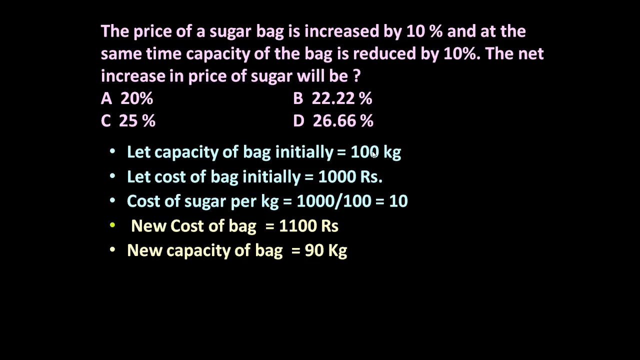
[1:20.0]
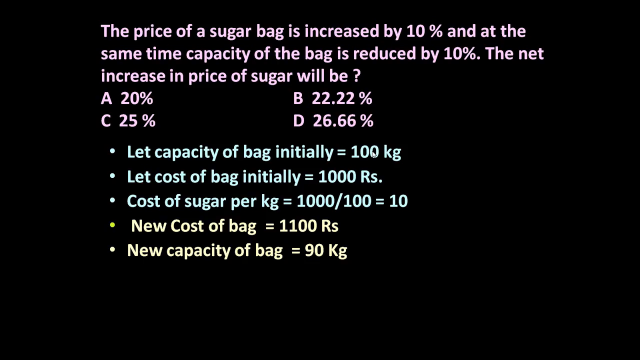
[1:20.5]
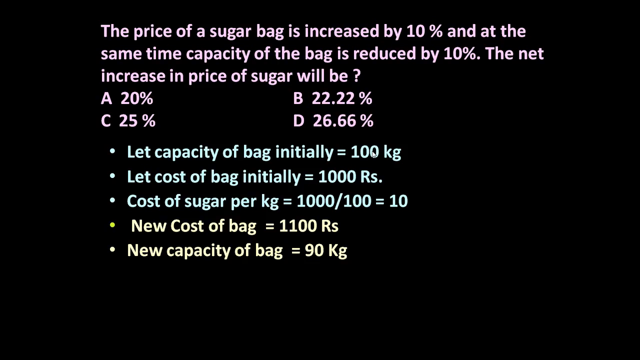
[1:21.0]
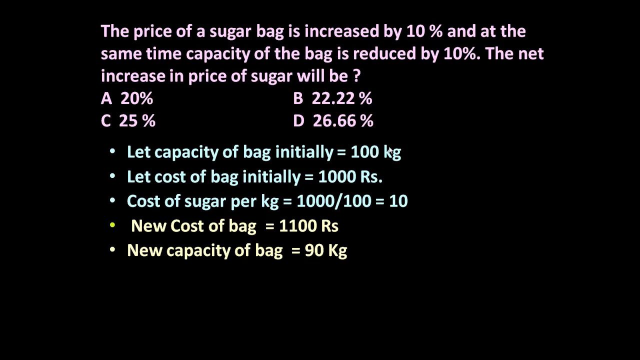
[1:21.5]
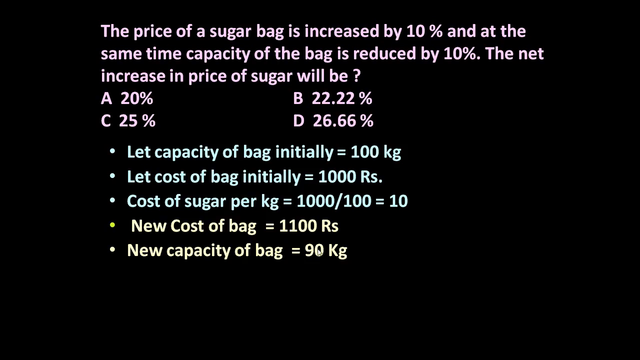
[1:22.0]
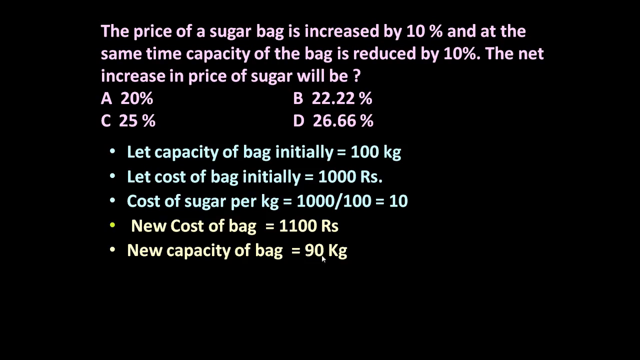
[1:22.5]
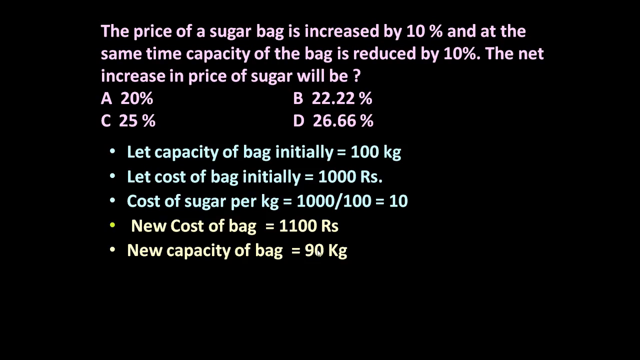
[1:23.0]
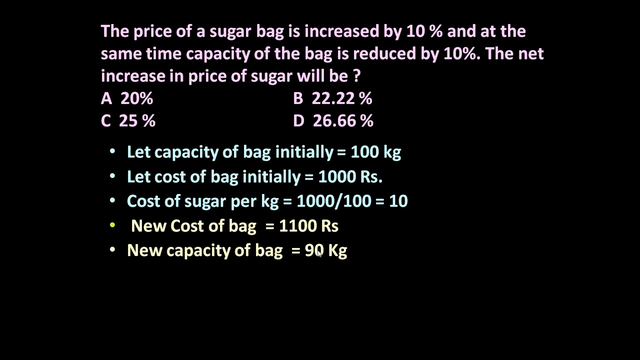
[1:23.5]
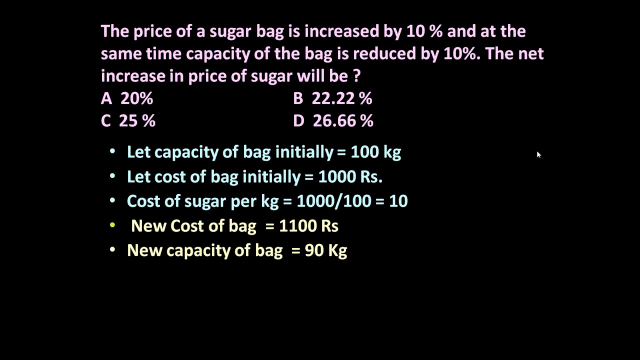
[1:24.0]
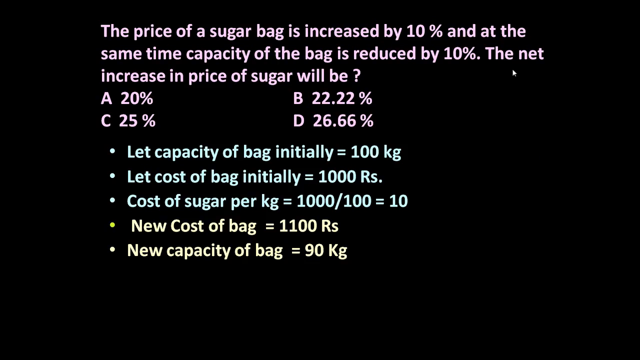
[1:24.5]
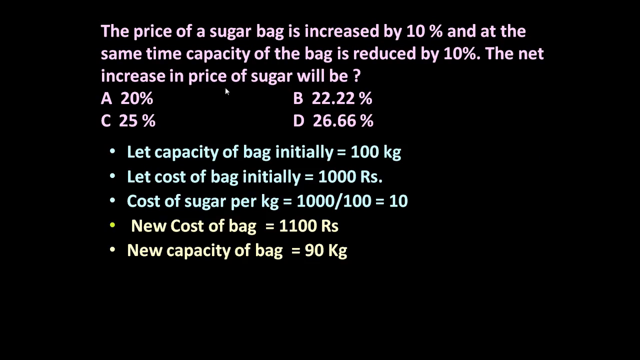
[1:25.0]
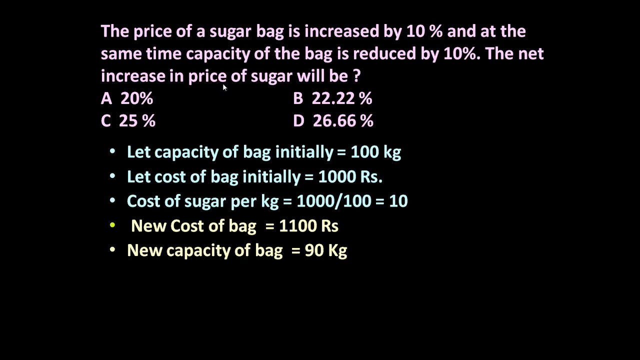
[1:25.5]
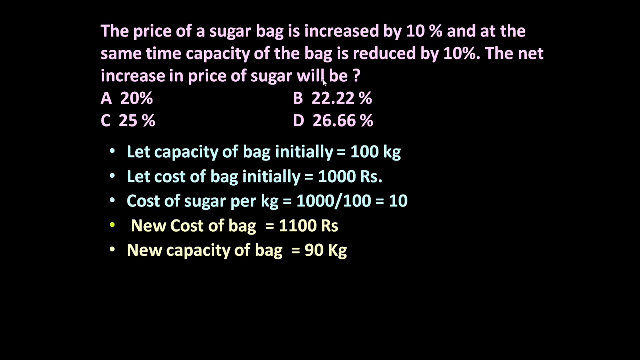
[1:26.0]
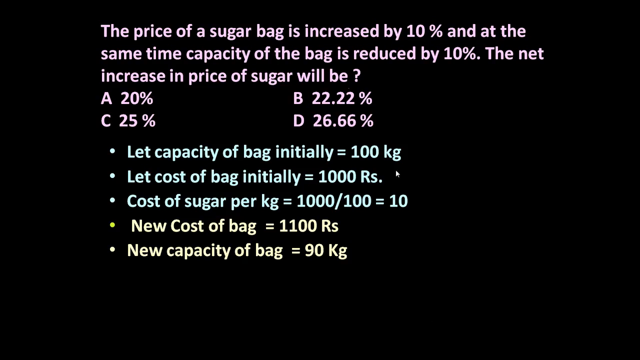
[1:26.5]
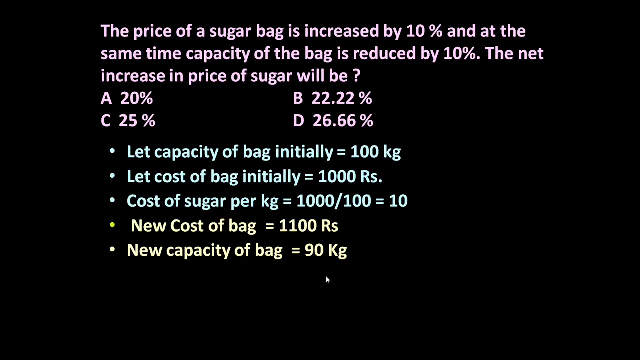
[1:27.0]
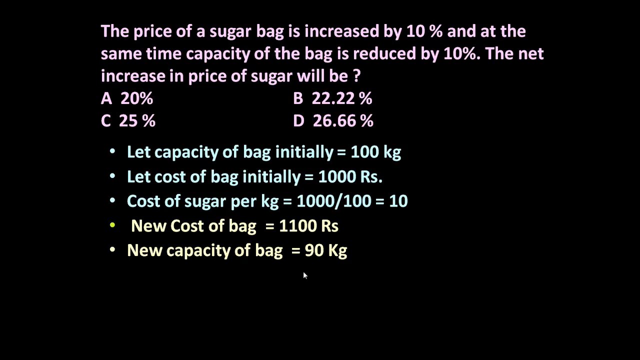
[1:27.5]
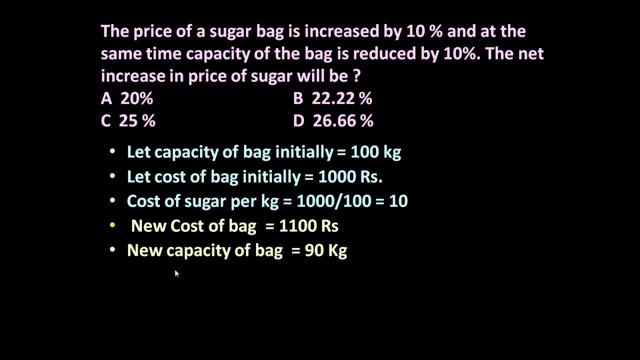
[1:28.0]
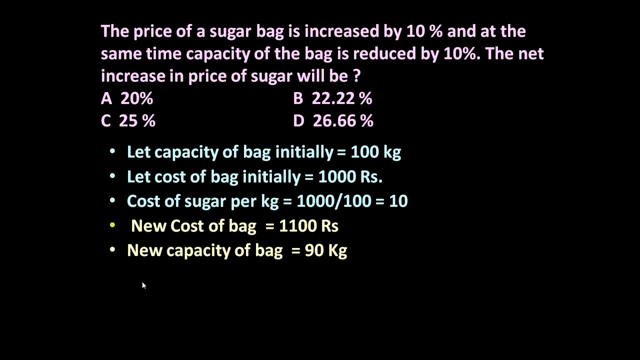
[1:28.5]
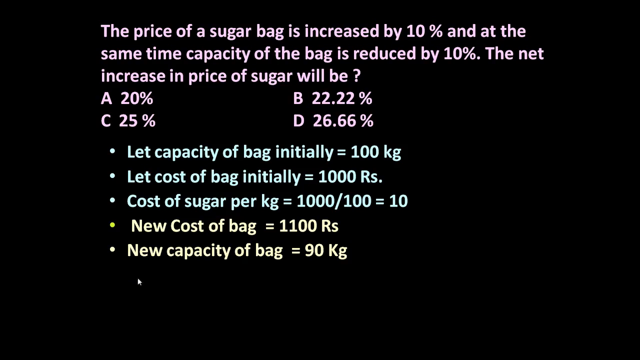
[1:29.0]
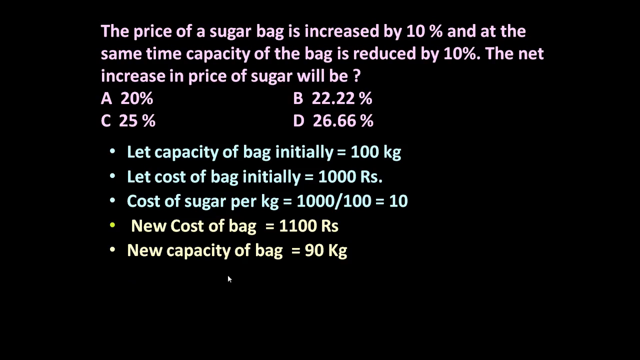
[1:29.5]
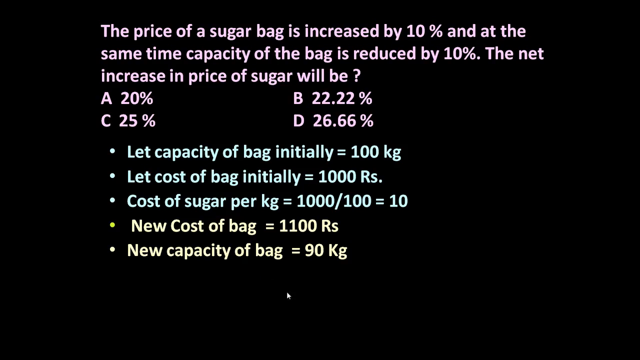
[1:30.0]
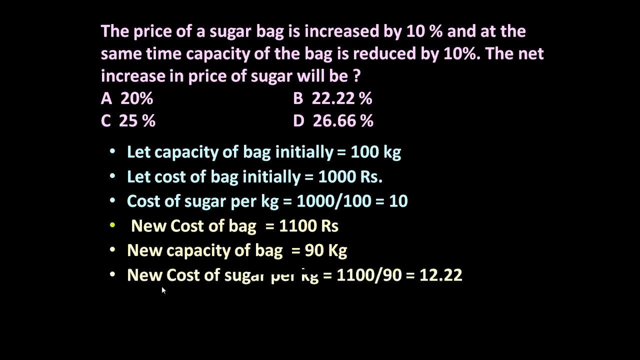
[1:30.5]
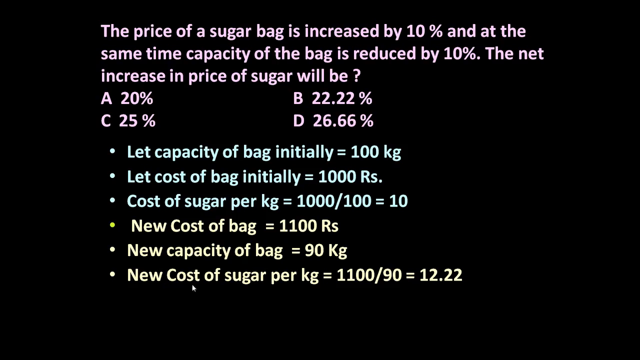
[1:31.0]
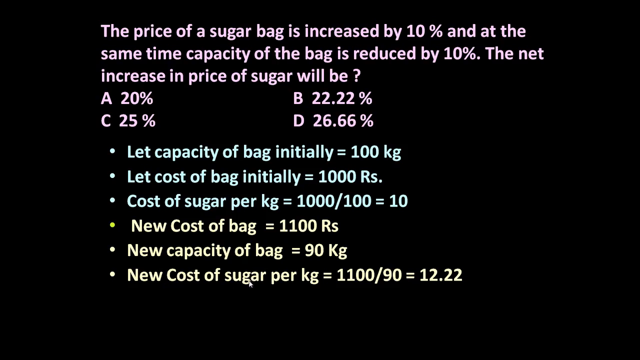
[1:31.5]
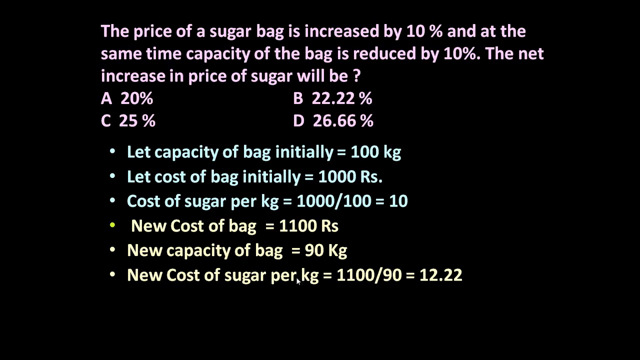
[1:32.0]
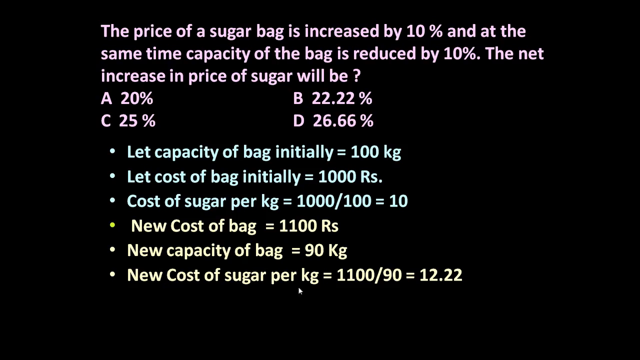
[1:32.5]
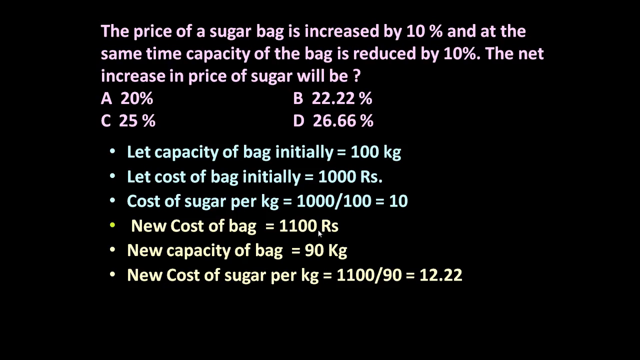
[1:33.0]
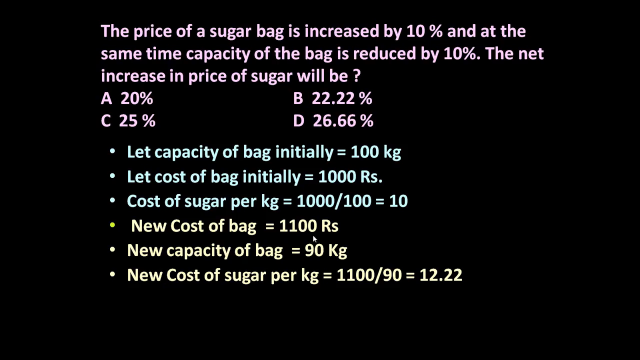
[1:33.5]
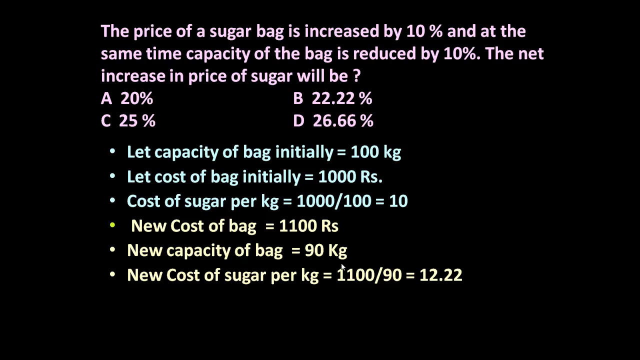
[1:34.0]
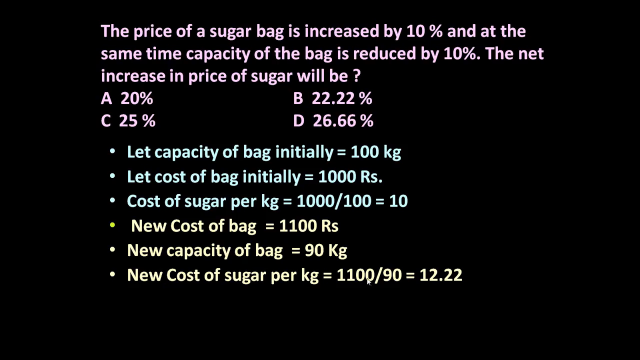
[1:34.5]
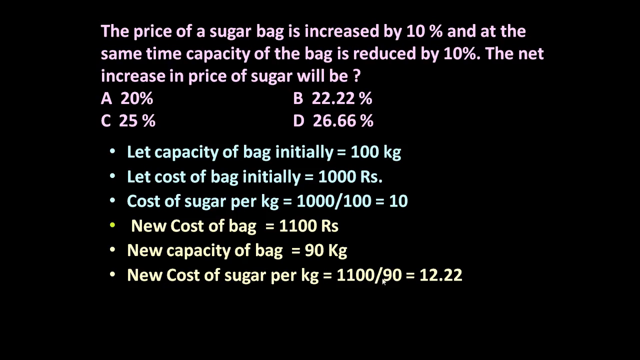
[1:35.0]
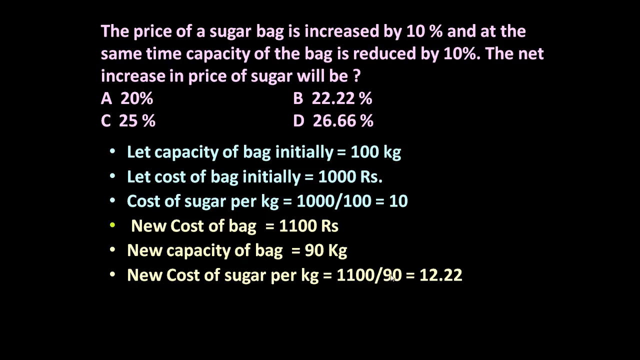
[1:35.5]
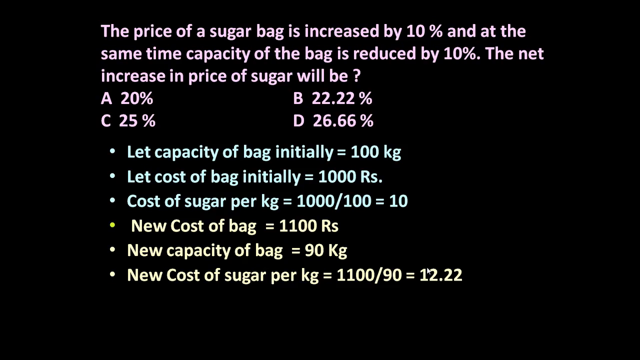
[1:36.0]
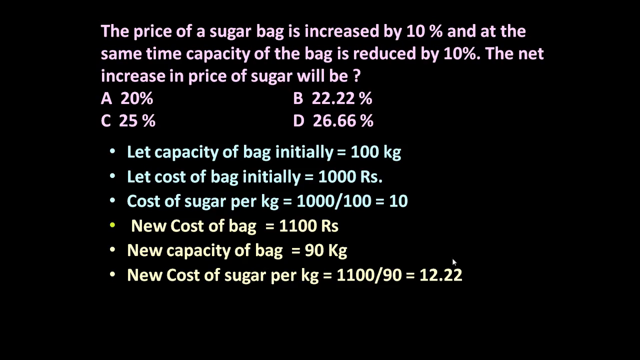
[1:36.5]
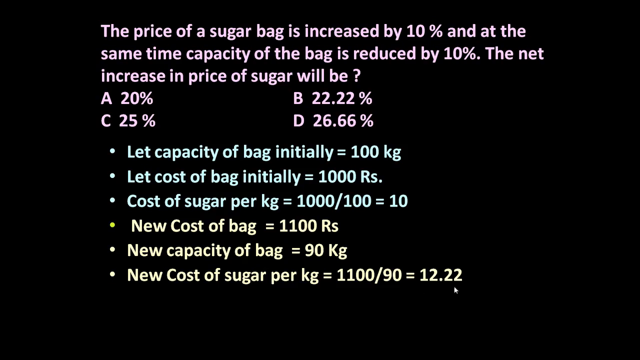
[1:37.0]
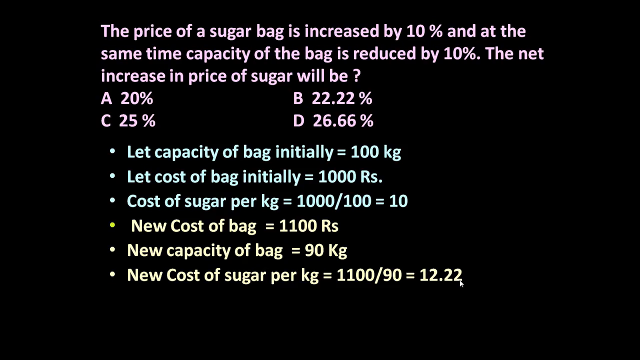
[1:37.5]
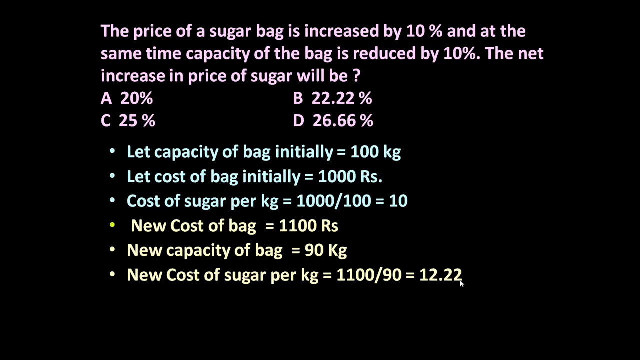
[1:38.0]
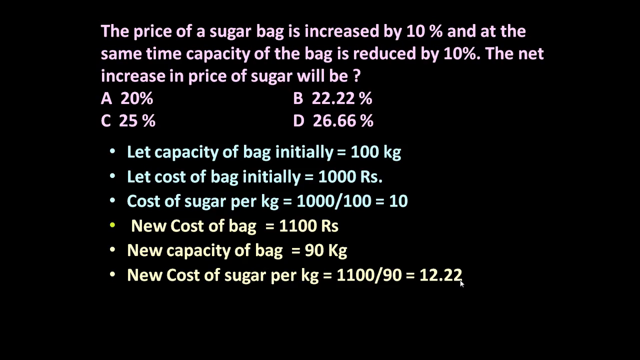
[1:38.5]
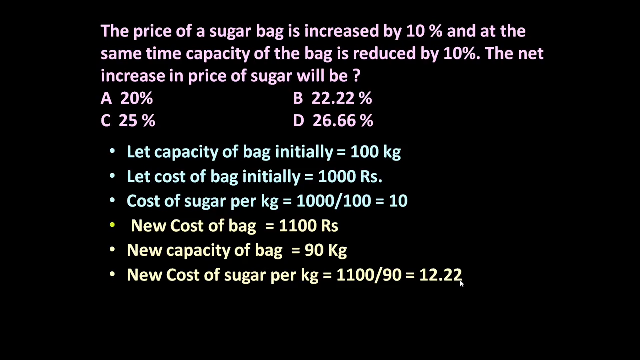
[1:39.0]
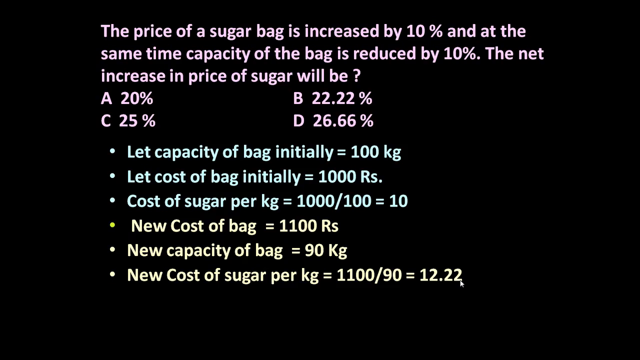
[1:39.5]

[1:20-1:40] The cursor moves around and then hovers over the 90 in the bottom bullet point. A new bullet point is animated onto the screen, reading "new cost of sugar per kg equals 1100 divided by 90 equals 12.22," showing the change in cost of sugar per kg after the changes to the price and capacity of the bag. The cursor jumps around the numbers along this bottom bullet point, which is in the same neon yellow as the two bullet points above it, different from the mint green of the three initial bullet points. There is only text on the screen, along with the cursor, a small arrow-like shape.